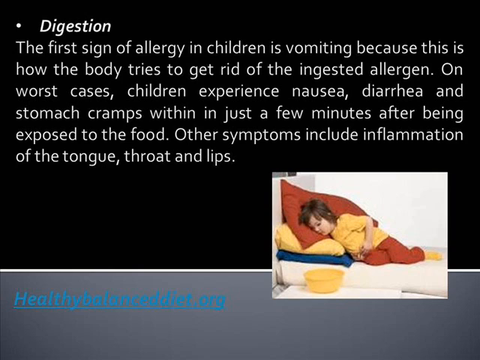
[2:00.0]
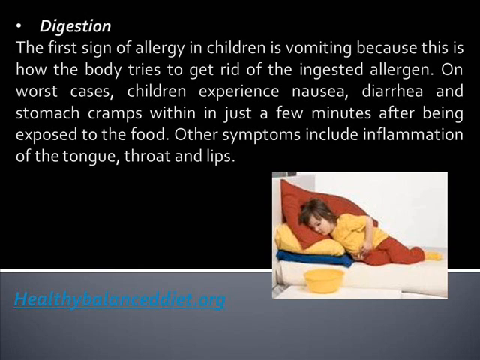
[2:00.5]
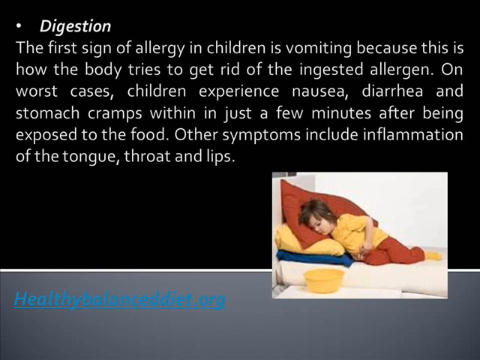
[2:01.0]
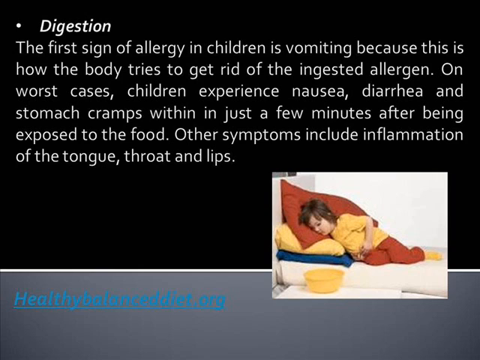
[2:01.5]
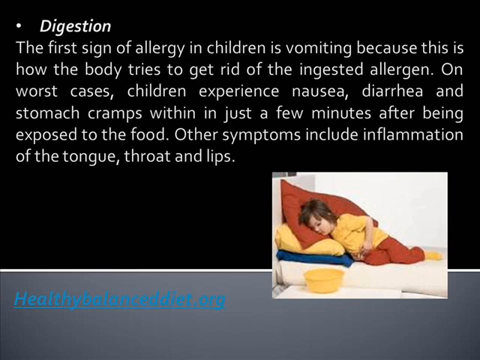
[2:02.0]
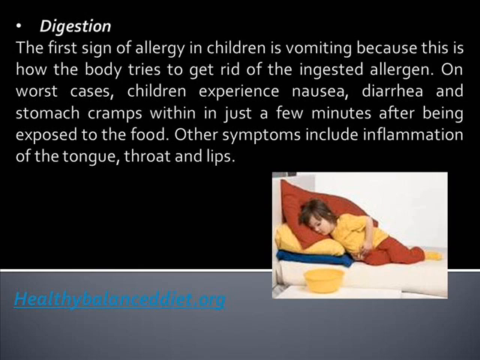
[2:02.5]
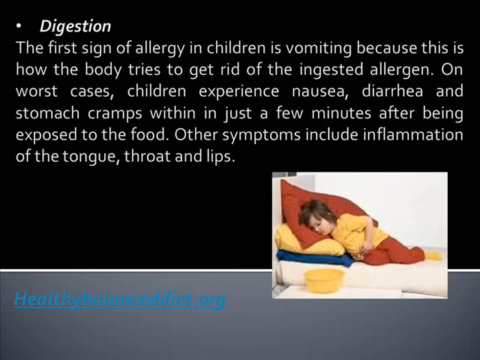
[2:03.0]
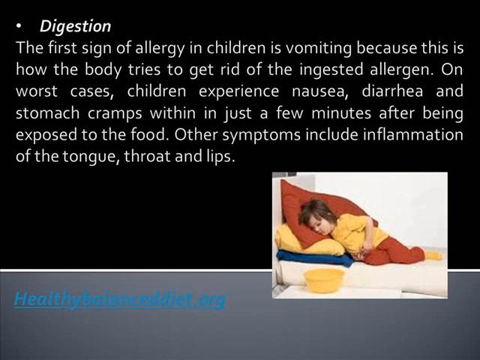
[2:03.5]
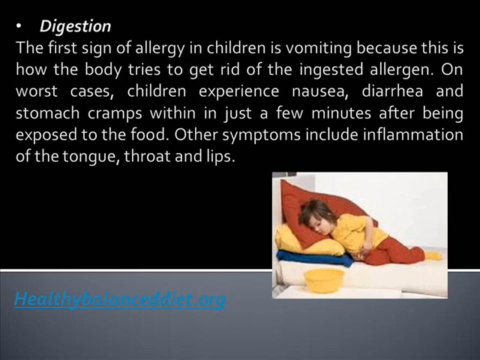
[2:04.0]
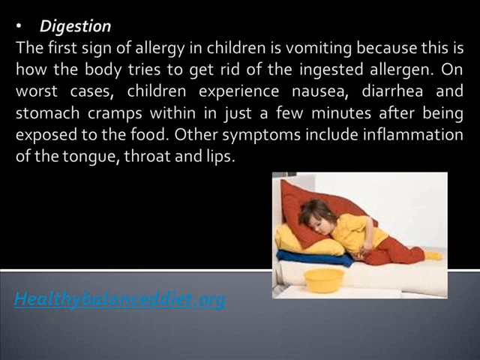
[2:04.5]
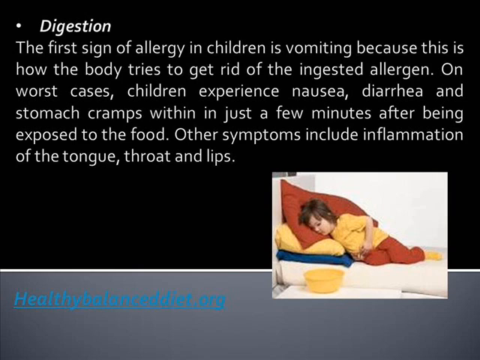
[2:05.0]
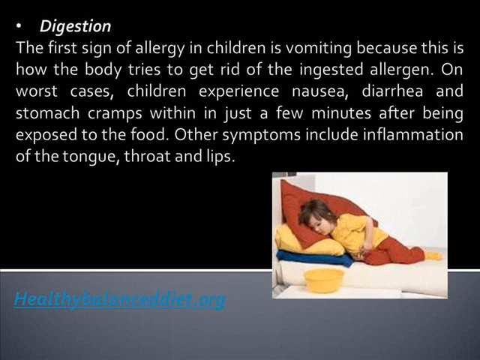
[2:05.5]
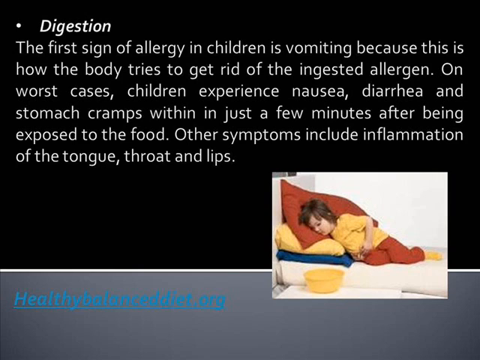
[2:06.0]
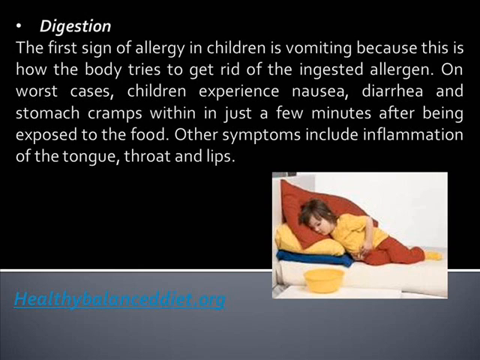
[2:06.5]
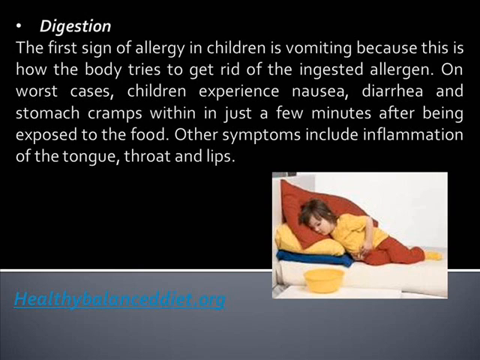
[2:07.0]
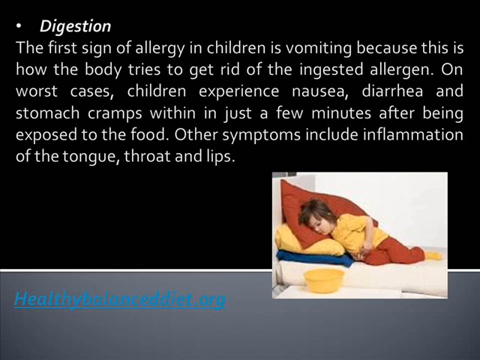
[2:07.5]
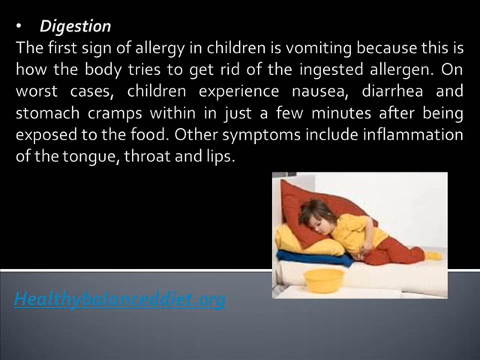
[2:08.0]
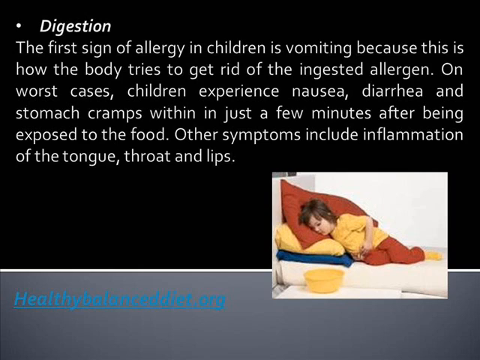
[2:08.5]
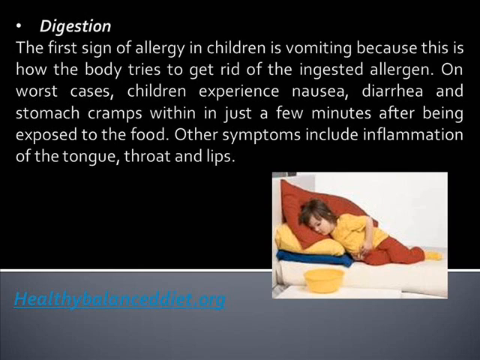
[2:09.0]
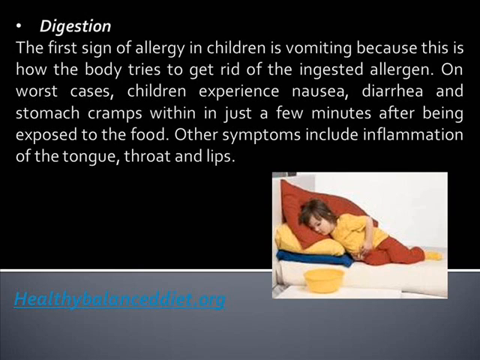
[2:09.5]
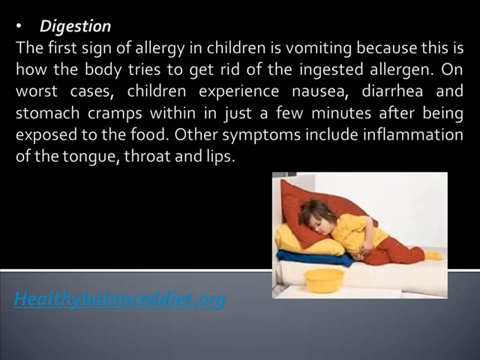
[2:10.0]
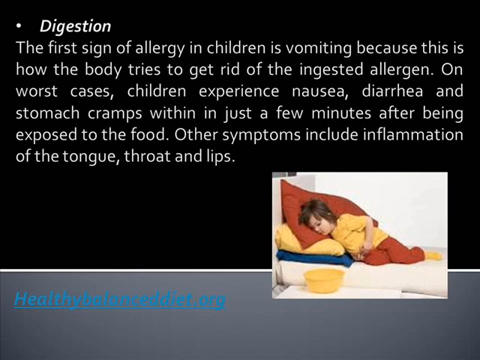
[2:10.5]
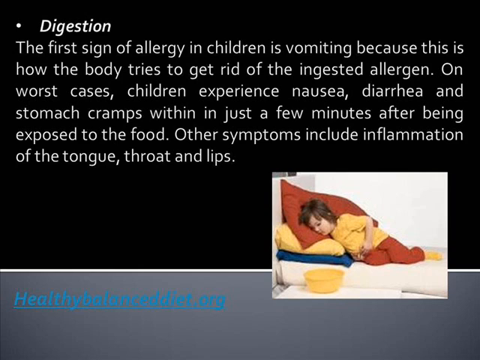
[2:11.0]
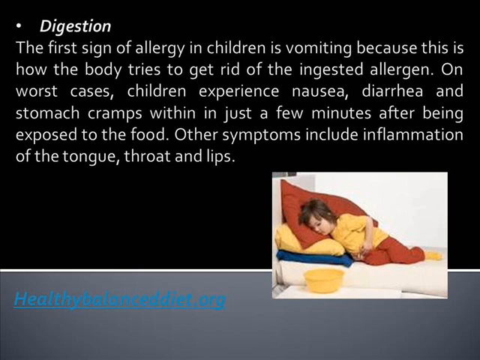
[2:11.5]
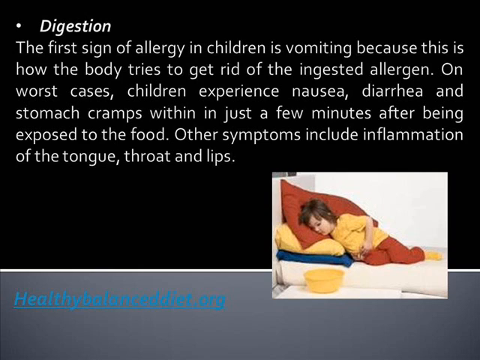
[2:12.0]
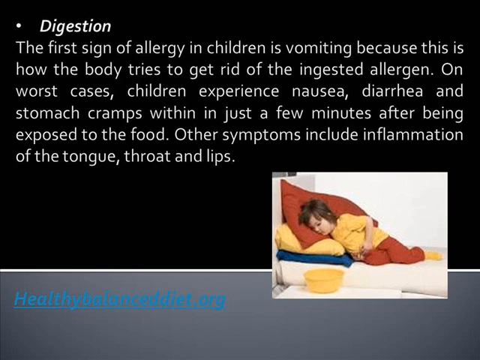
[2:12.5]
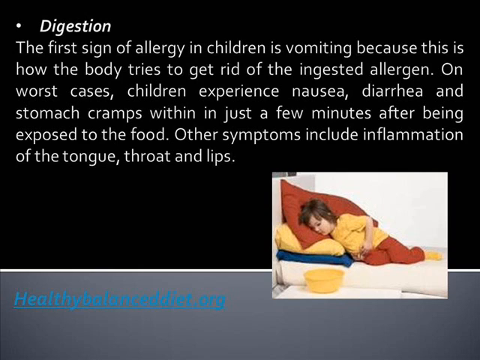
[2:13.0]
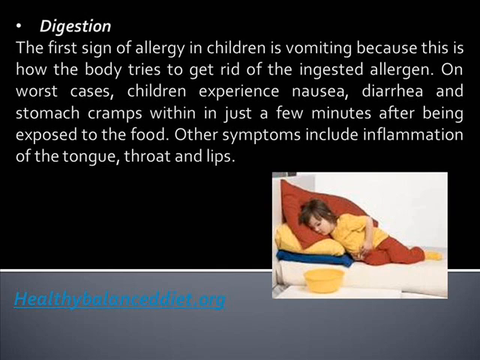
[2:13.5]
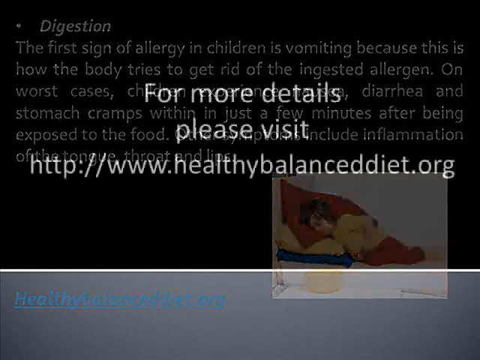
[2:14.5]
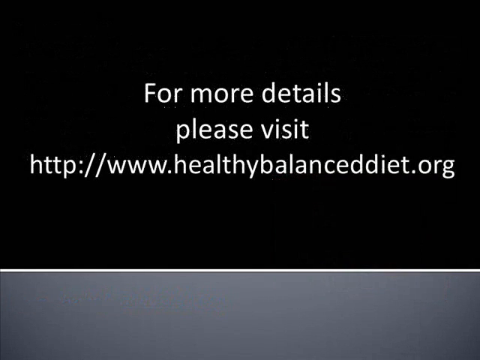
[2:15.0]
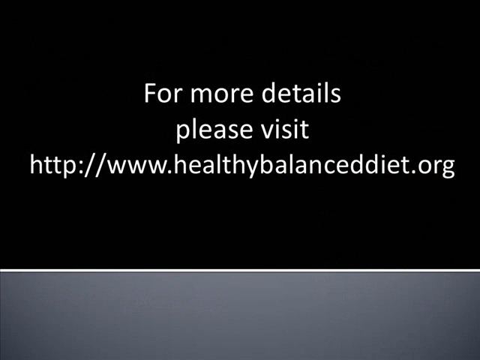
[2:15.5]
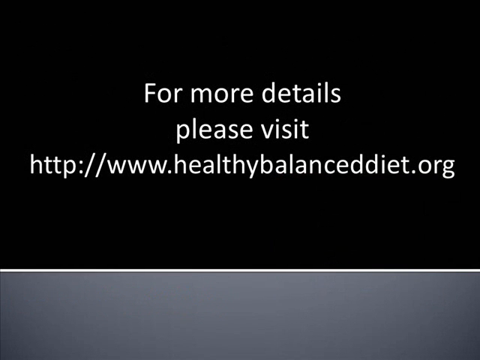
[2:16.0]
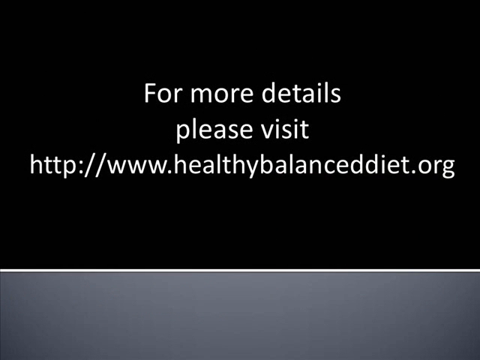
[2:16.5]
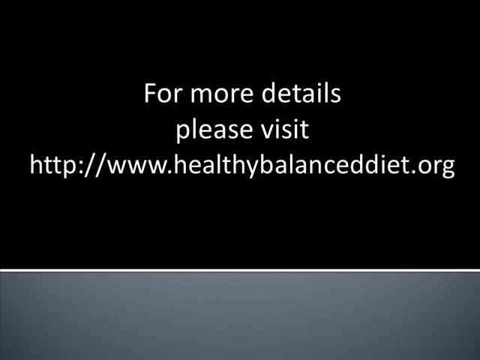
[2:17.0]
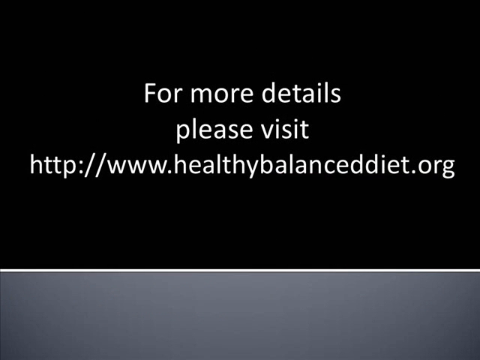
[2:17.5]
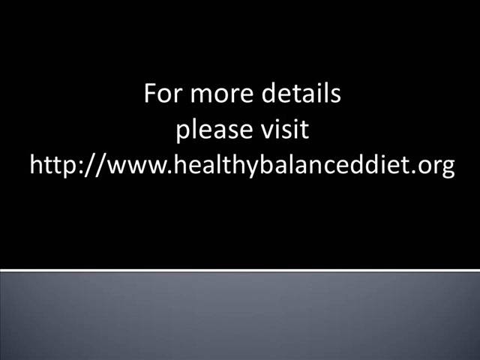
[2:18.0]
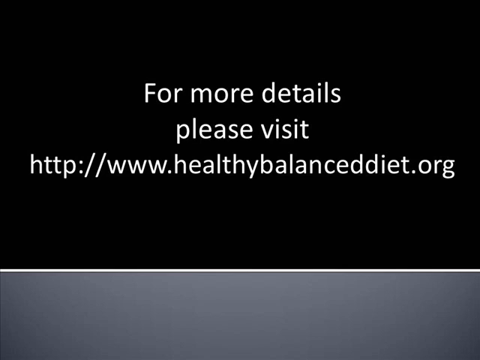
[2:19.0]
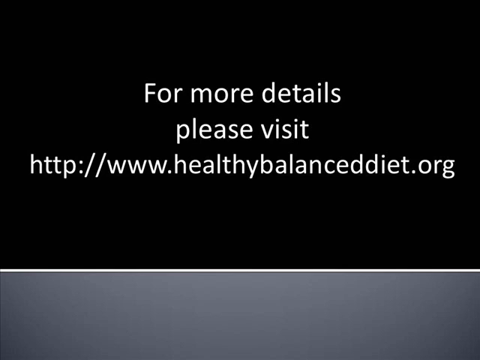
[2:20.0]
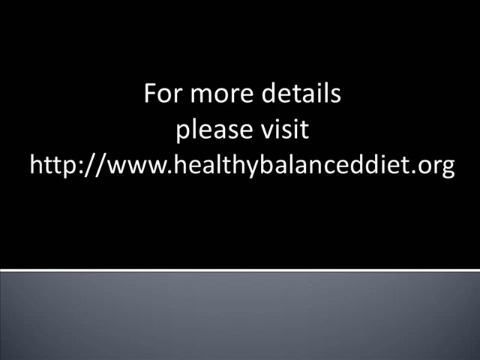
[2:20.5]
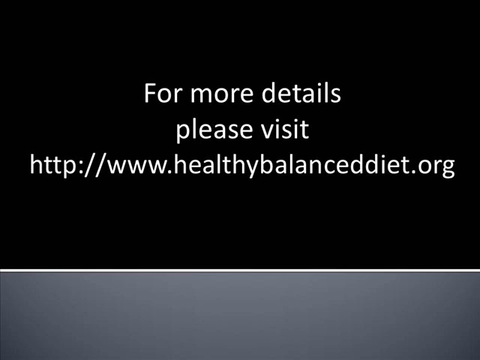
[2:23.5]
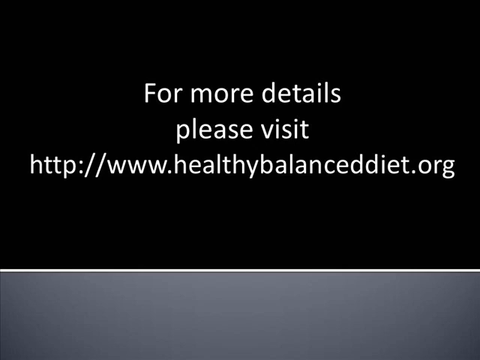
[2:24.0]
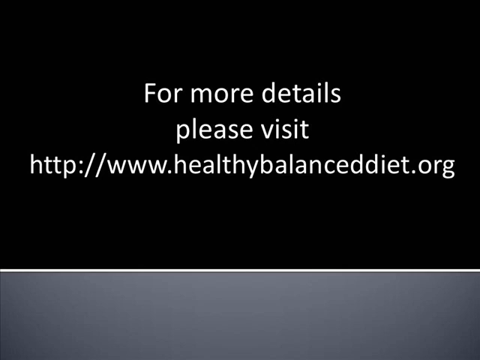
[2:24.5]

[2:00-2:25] The digestion graphic gives way to an all-black background; the website and the photo disappear. The gray banner and the thin white line separating it from the black remain at the bottom. White text over three lines reads "for more details," then "please visit," then "http://www.healthybalanceddiet.org".